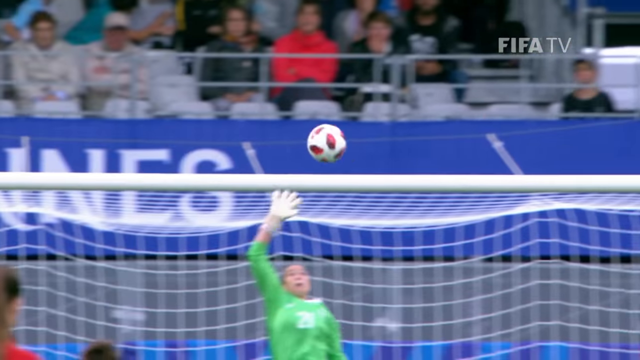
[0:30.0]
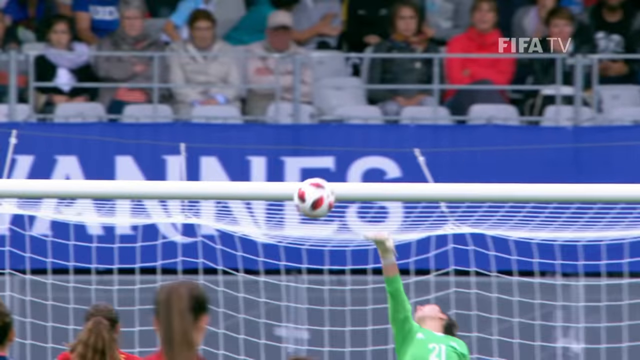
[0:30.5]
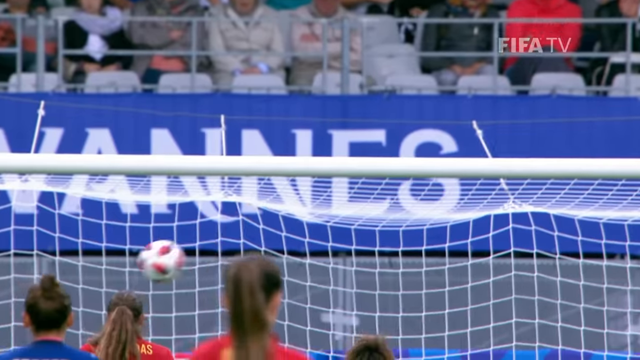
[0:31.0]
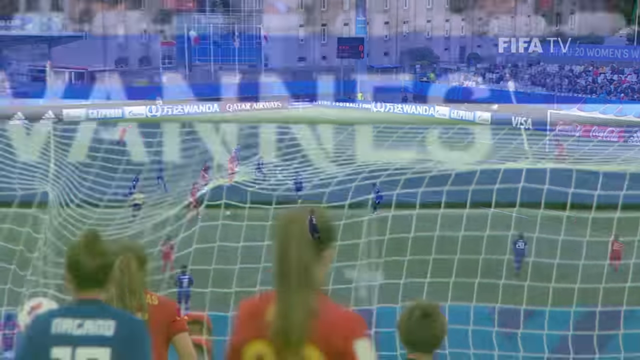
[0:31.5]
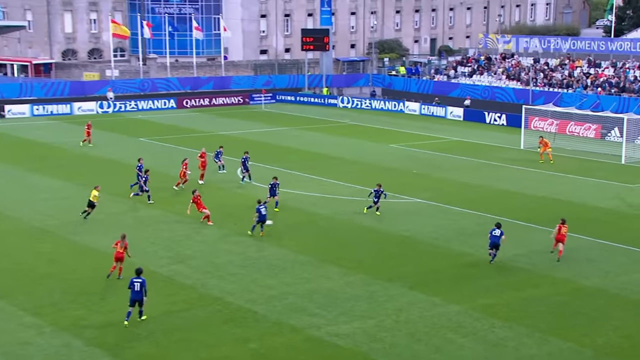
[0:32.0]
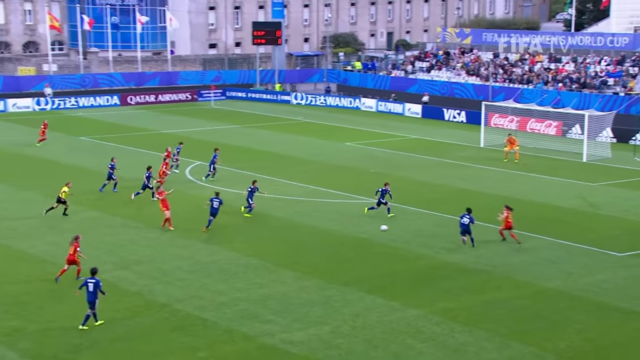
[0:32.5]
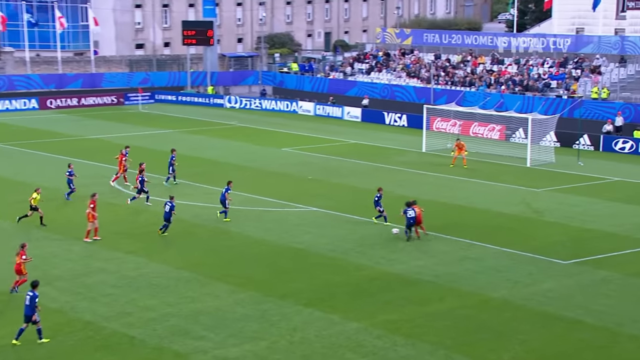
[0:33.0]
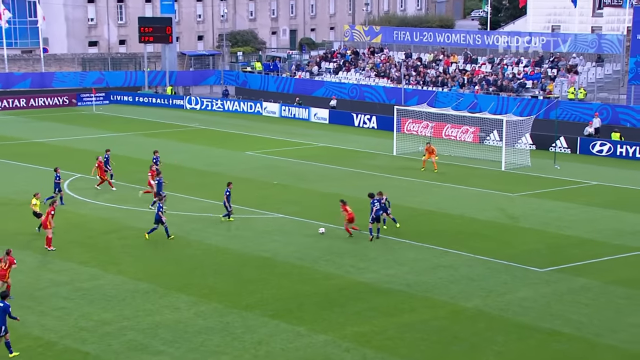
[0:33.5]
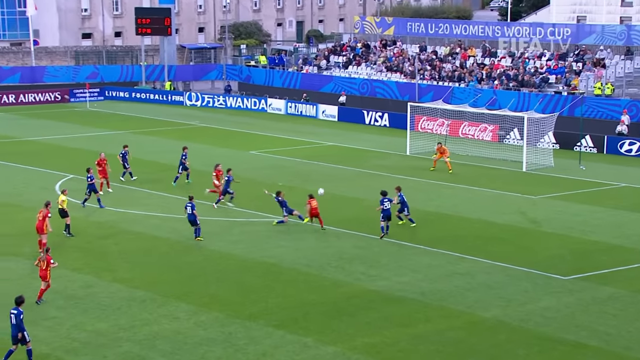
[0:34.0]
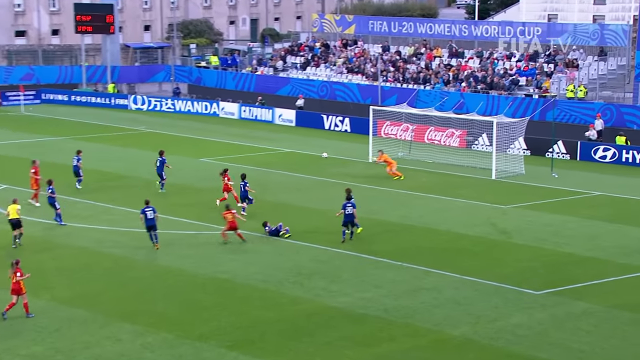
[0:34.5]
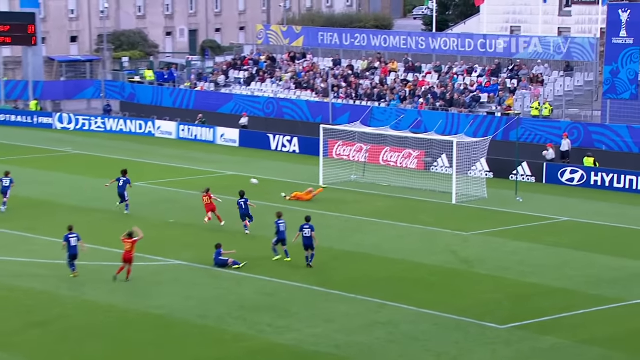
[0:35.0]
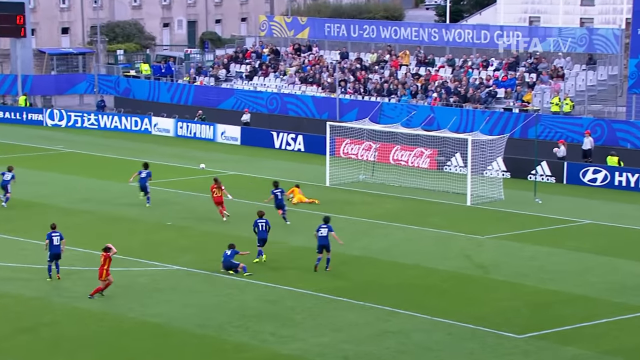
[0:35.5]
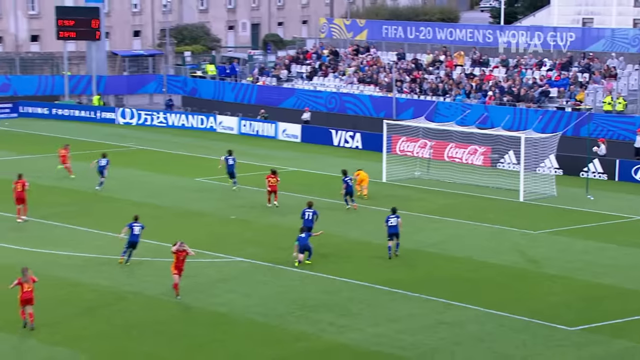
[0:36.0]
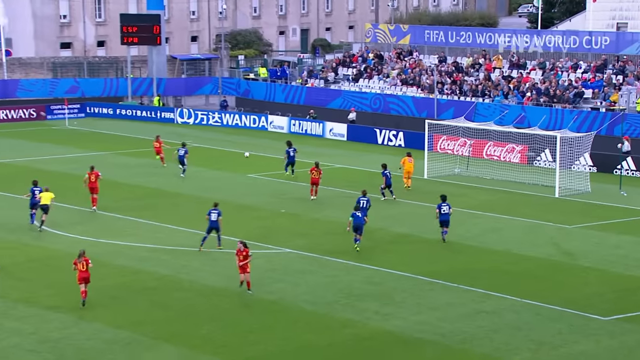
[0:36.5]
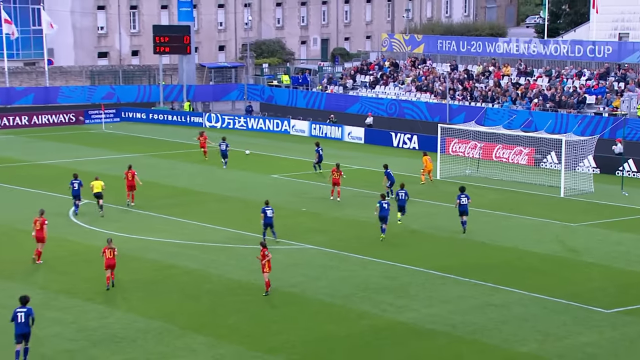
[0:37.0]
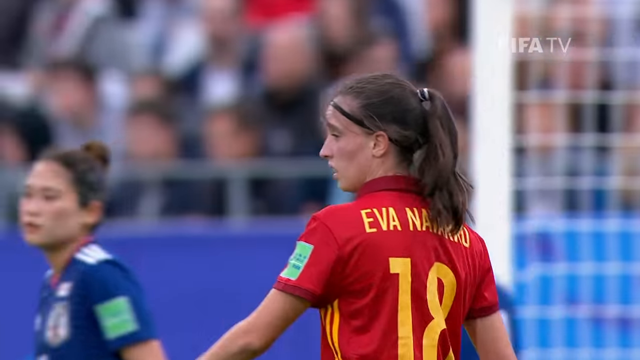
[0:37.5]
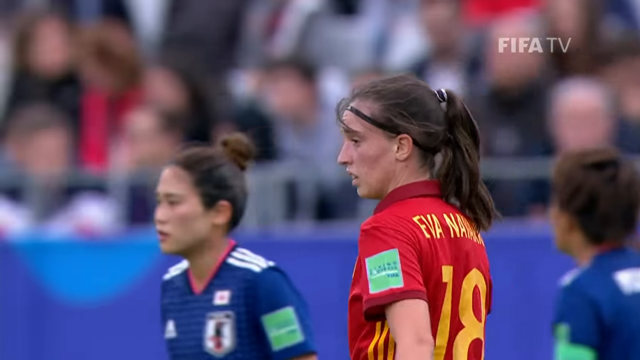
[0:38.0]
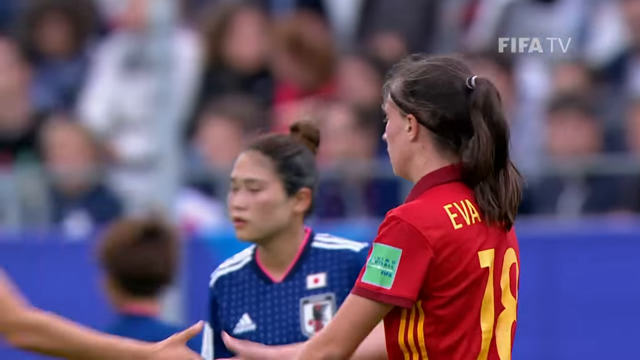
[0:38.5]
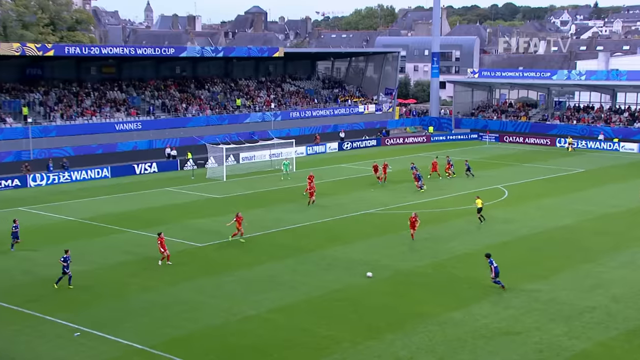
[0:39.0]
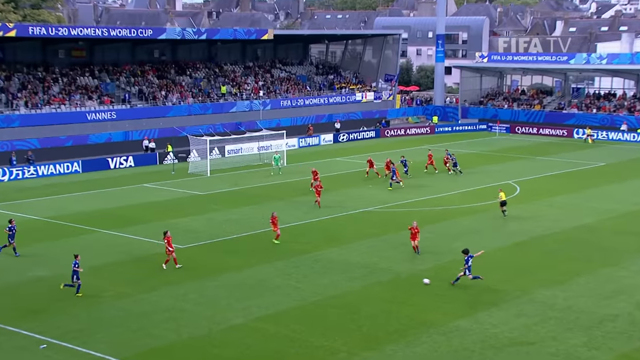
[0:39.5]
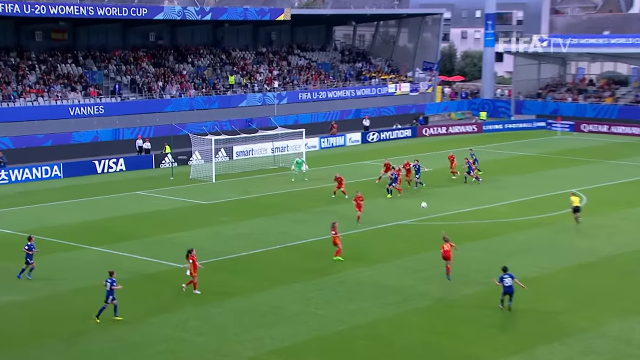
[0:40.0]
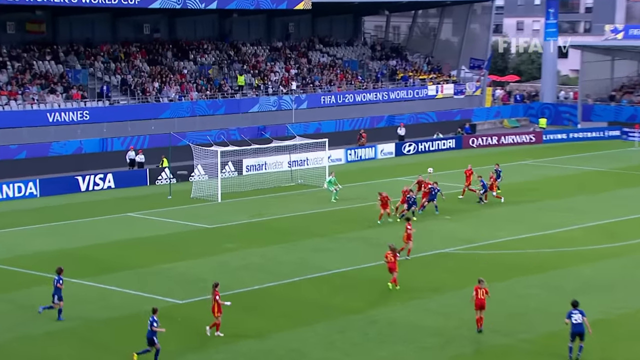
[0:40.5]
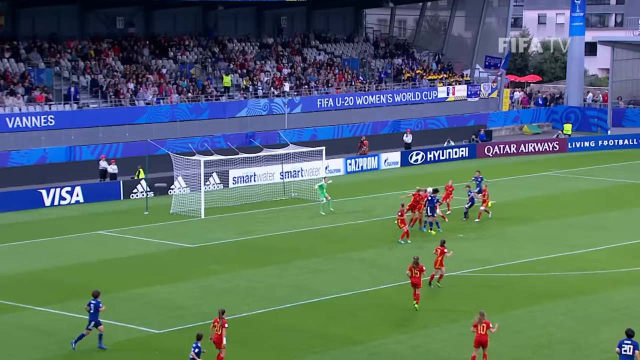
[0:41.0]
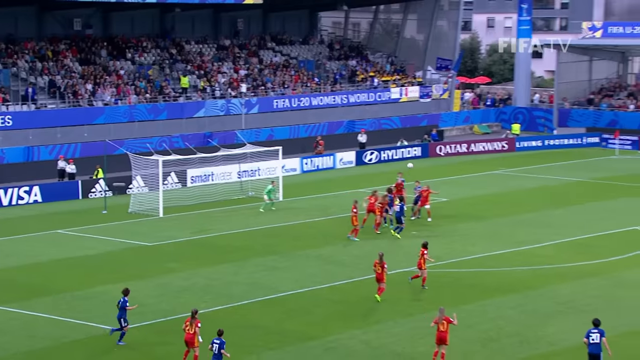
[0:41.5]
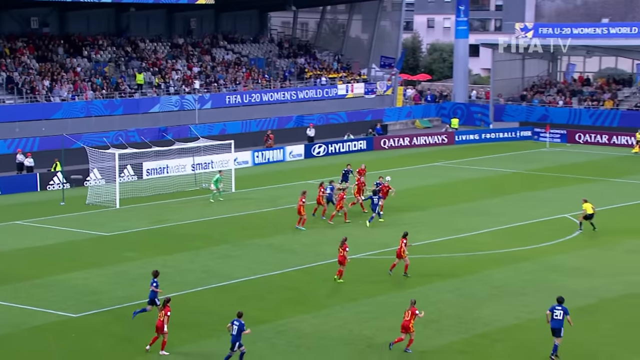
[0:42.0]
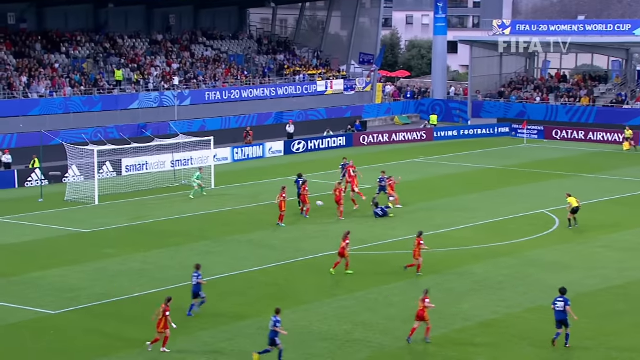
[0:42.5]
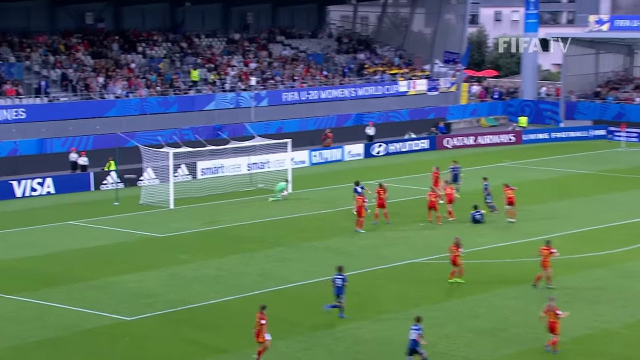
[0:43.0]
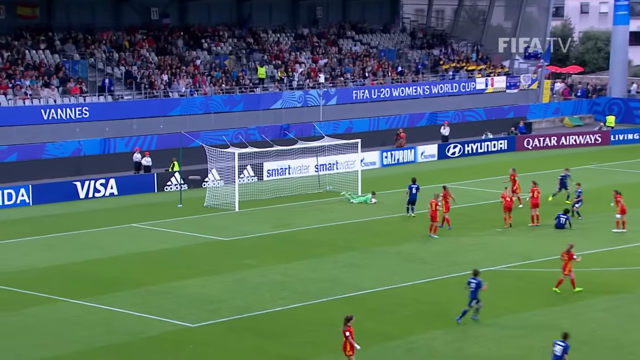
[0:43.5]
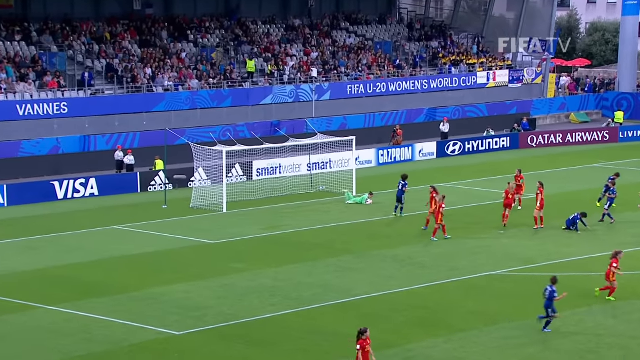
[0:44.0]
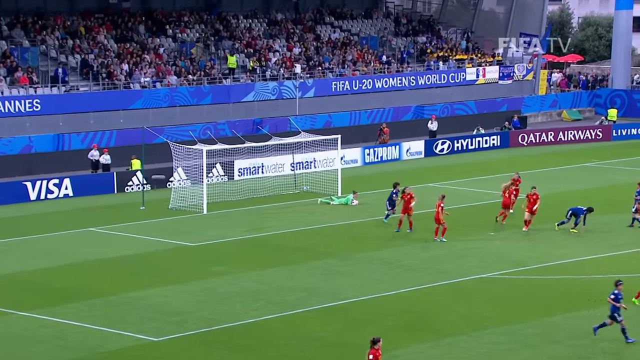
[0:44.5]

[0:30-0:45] The final game of the women's world soccer championship, Japan against Spain, recorded on FIFA TV. The Japanese wear blue uniforms and the Spanish wear red uniforms. The video almost always shows the highlights of the action on the field. At the beginning the players walk out, apparently accompanied by little boys. The only other cutaways are a man in the stadium at the beginning and three people who look like coaches deciding on a play. Some shots show the ball just barely touched, but not enough to block it. At the end, after Japan wins 3 to 1, the players jump up and down as a lot of confetti comes down and everybody cheers.